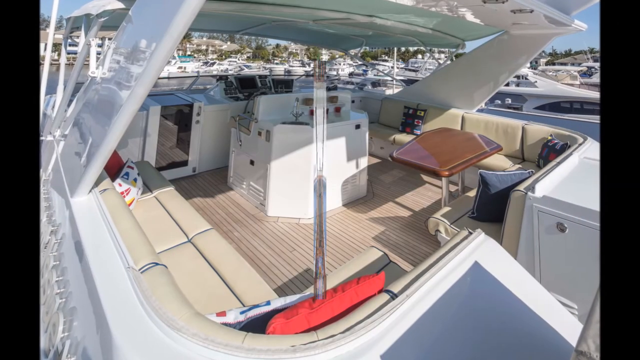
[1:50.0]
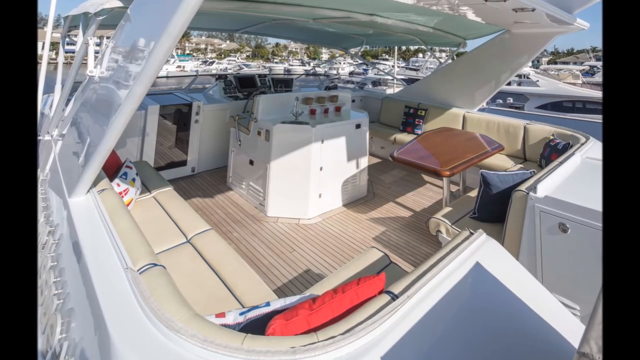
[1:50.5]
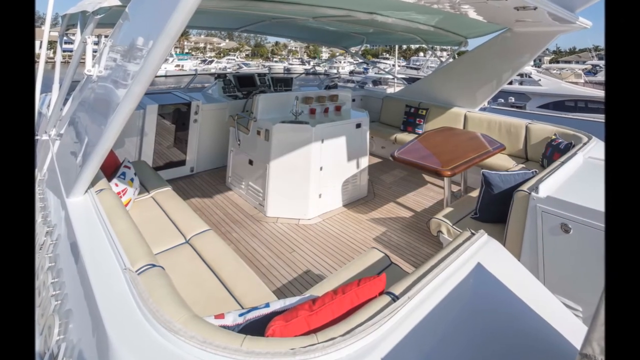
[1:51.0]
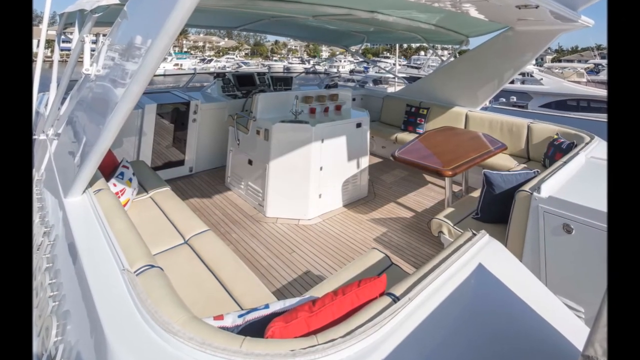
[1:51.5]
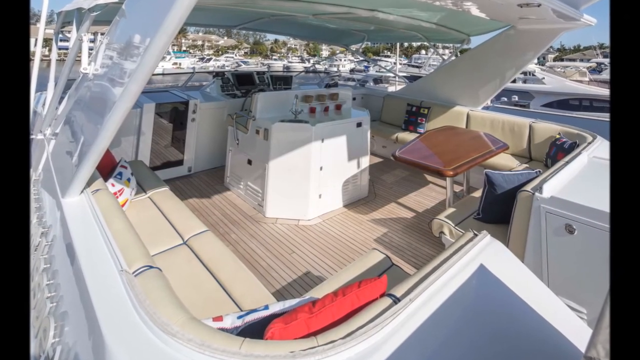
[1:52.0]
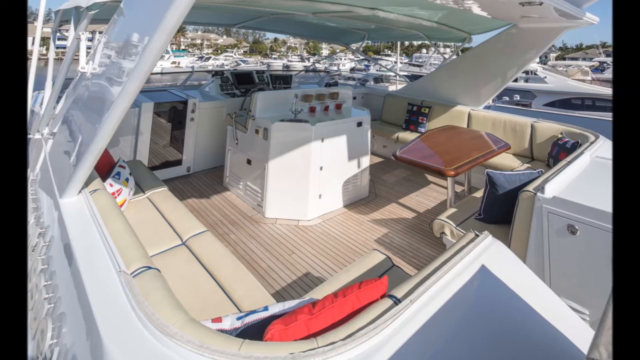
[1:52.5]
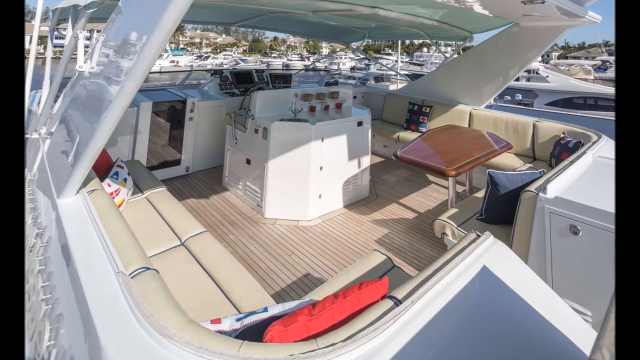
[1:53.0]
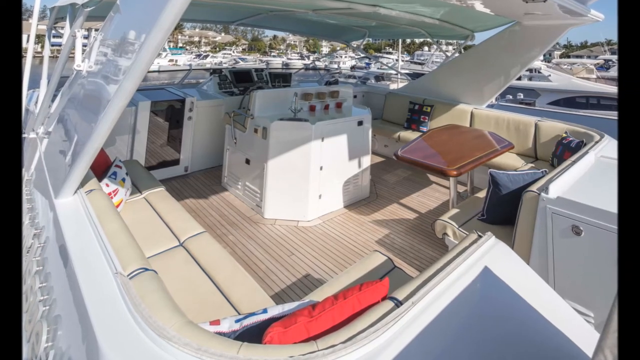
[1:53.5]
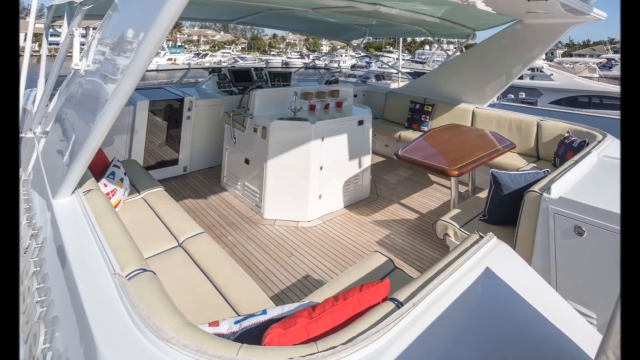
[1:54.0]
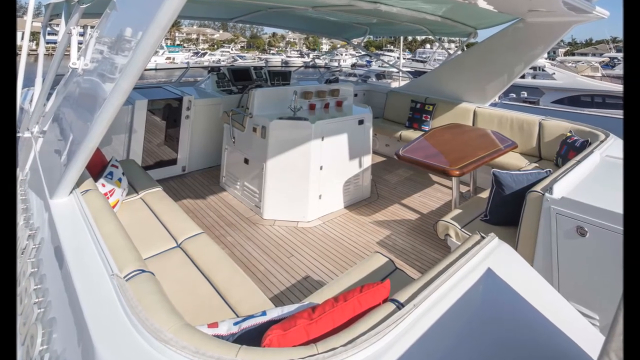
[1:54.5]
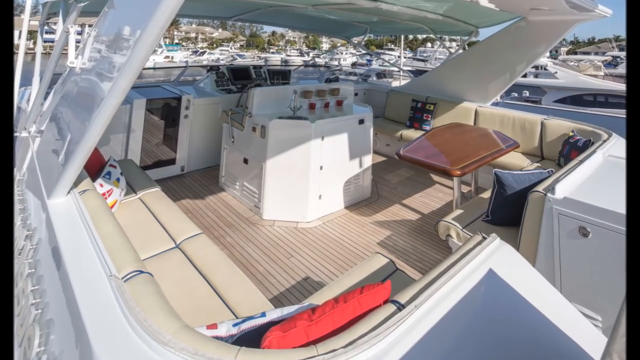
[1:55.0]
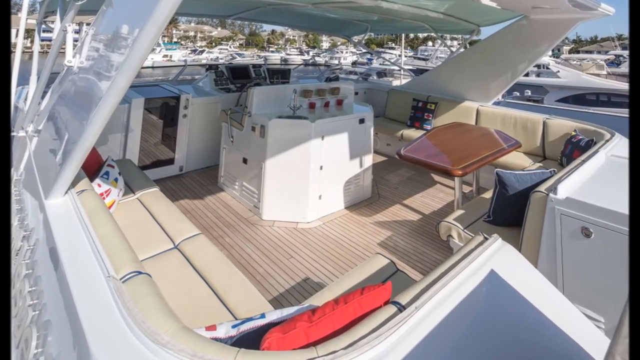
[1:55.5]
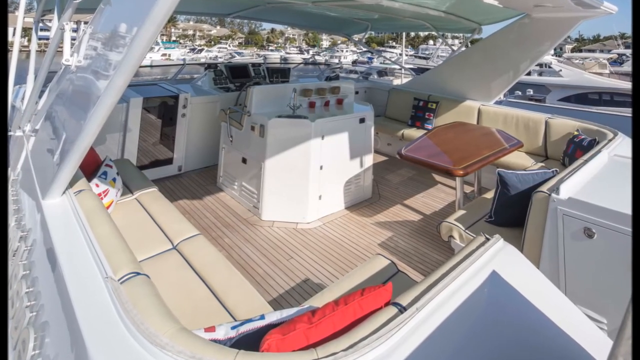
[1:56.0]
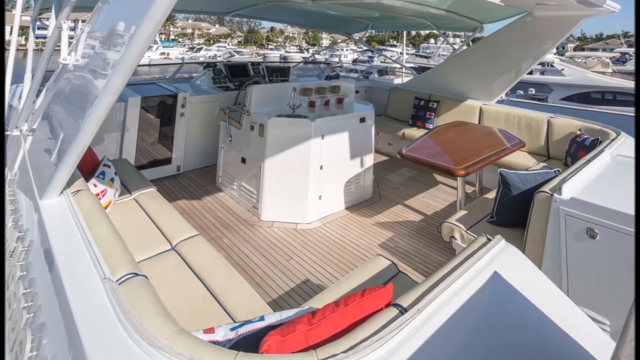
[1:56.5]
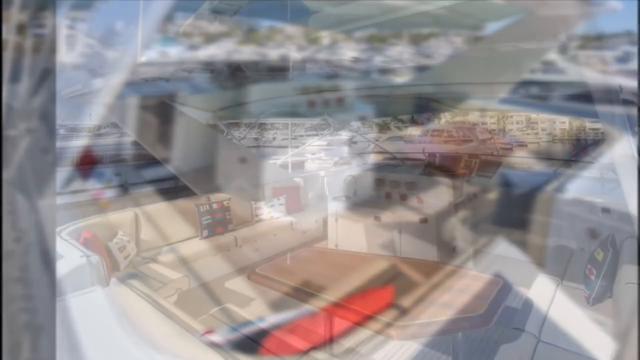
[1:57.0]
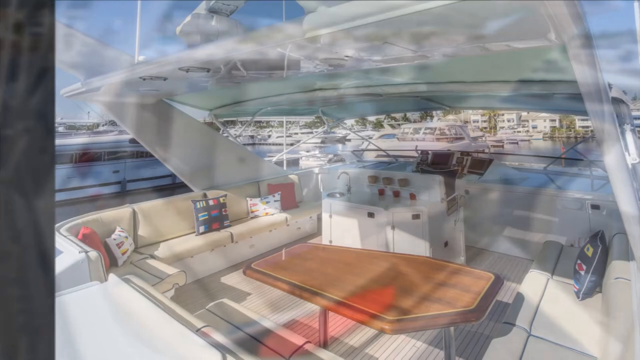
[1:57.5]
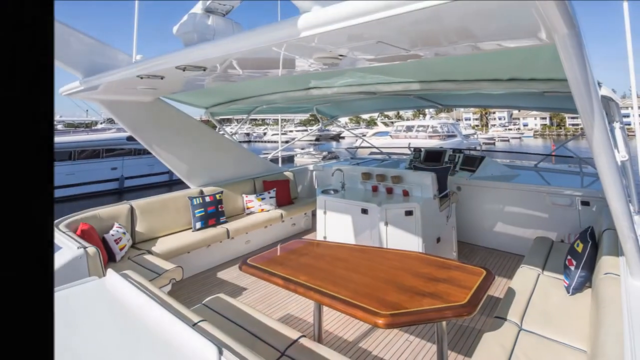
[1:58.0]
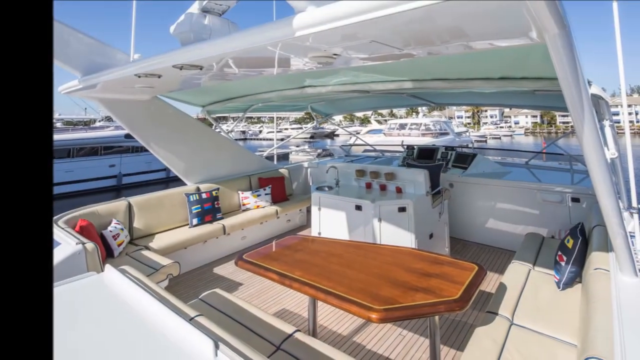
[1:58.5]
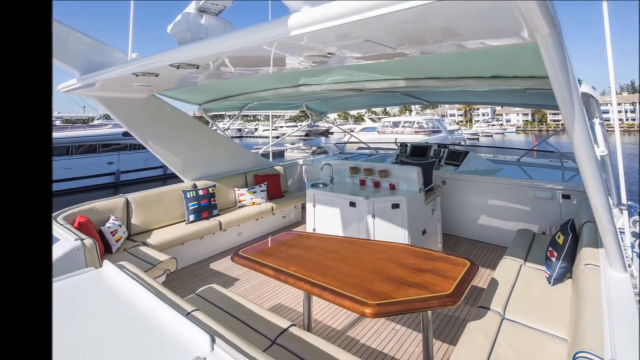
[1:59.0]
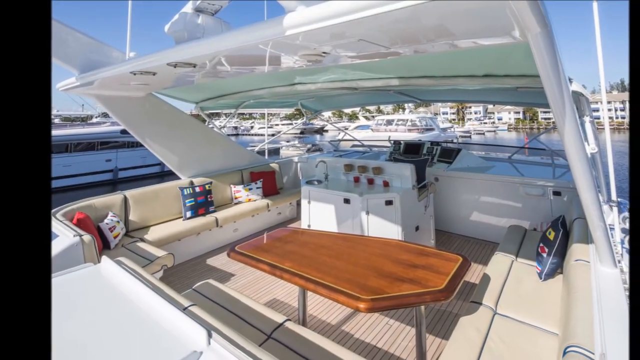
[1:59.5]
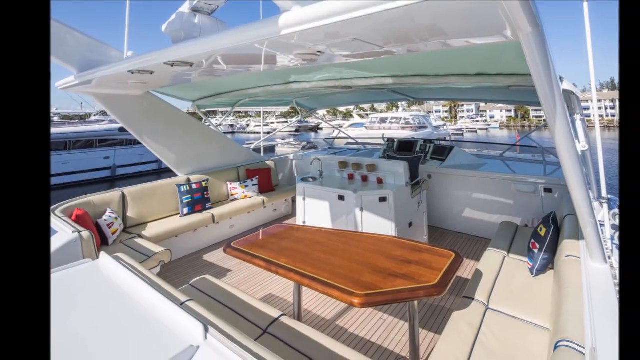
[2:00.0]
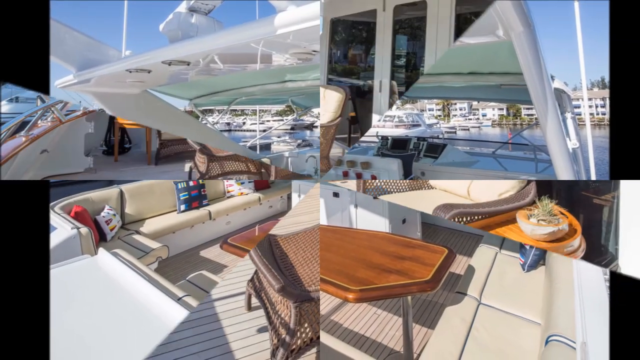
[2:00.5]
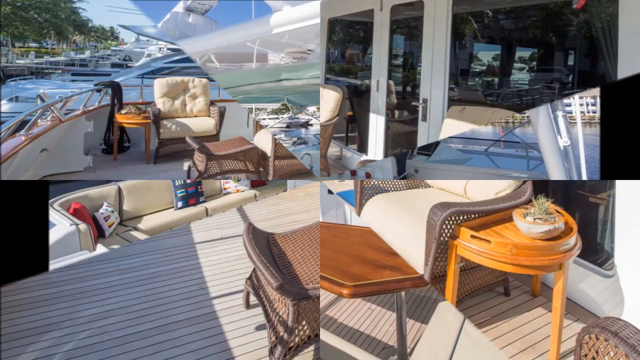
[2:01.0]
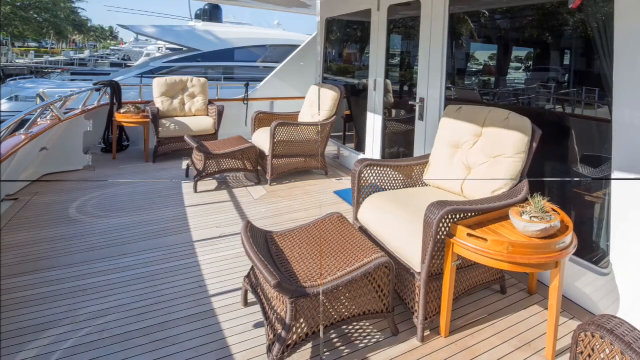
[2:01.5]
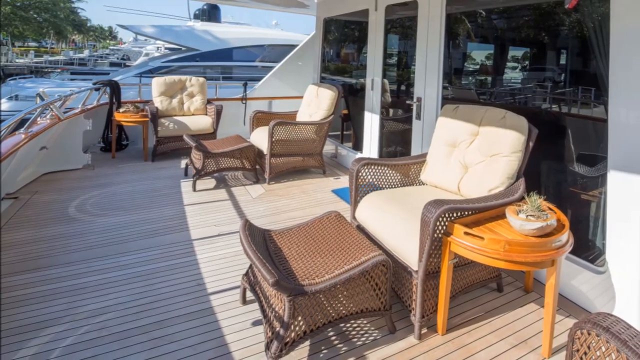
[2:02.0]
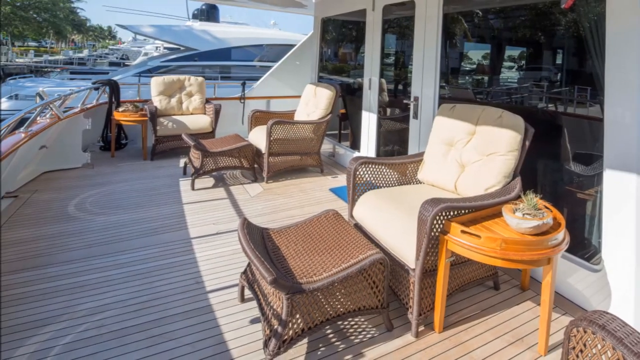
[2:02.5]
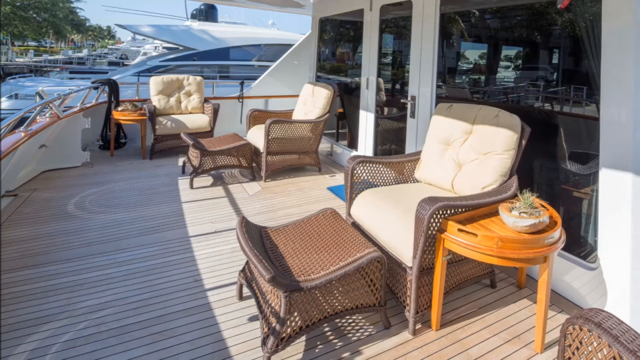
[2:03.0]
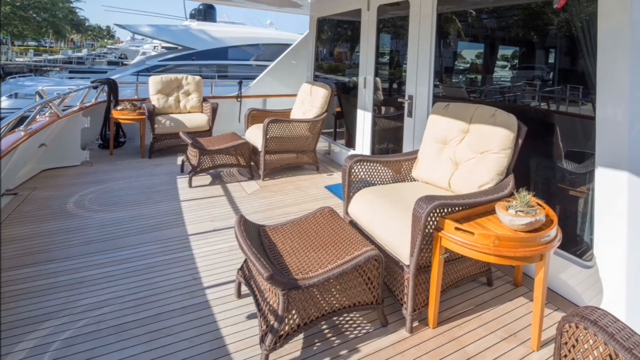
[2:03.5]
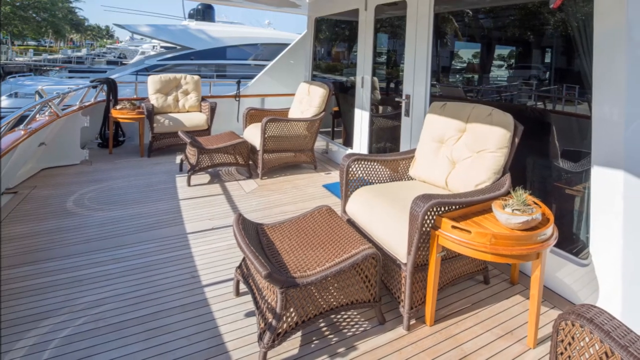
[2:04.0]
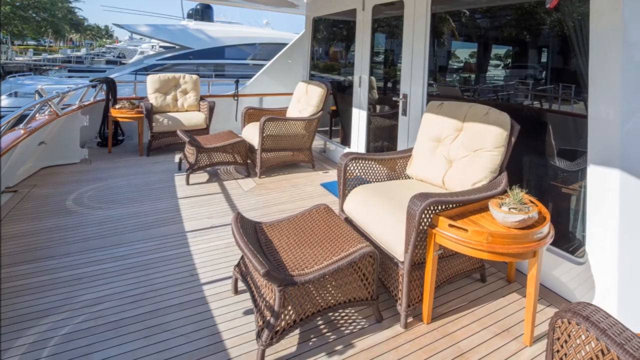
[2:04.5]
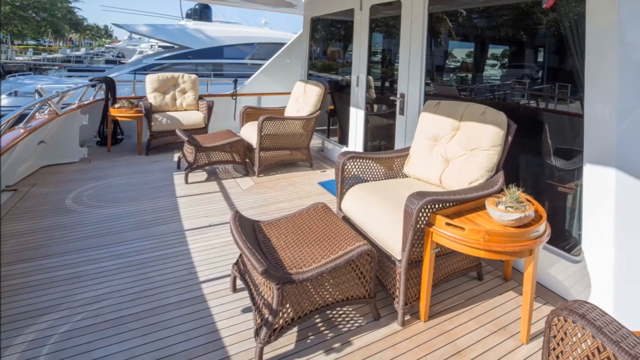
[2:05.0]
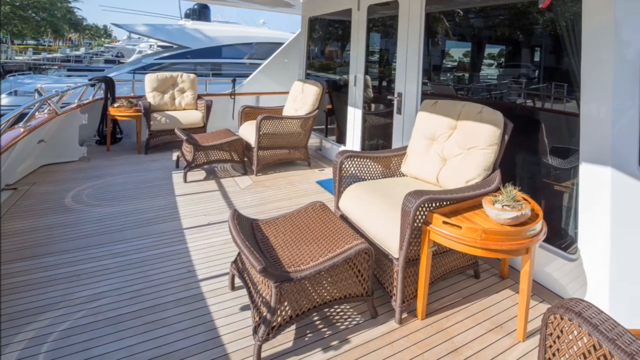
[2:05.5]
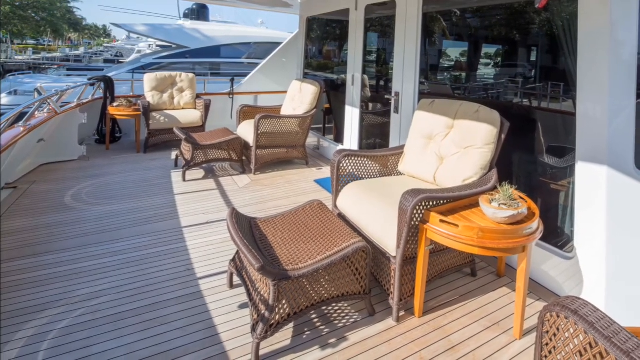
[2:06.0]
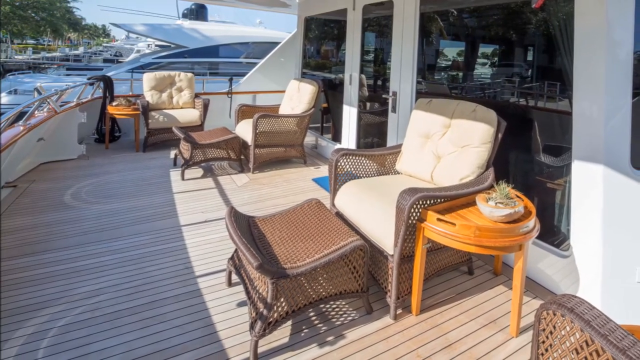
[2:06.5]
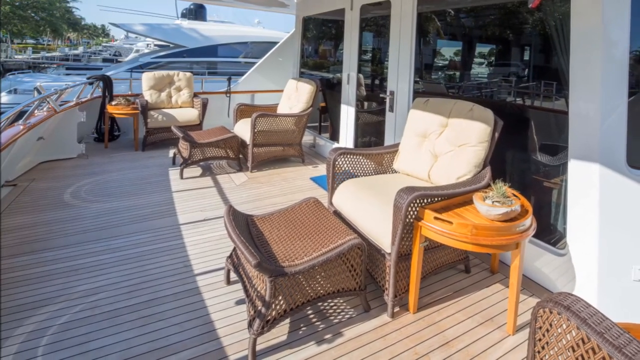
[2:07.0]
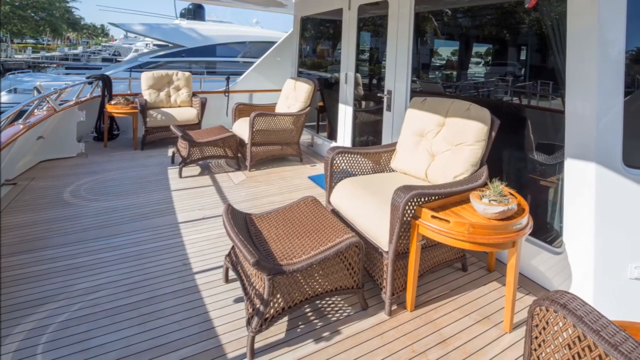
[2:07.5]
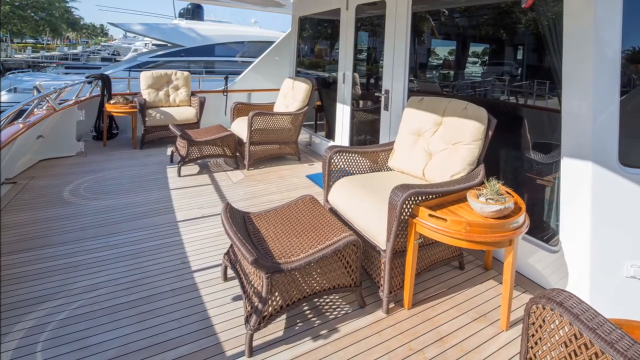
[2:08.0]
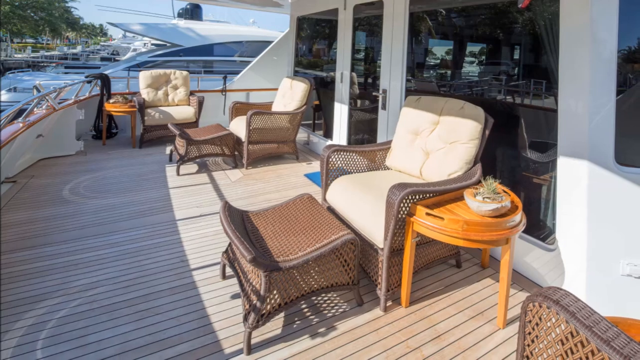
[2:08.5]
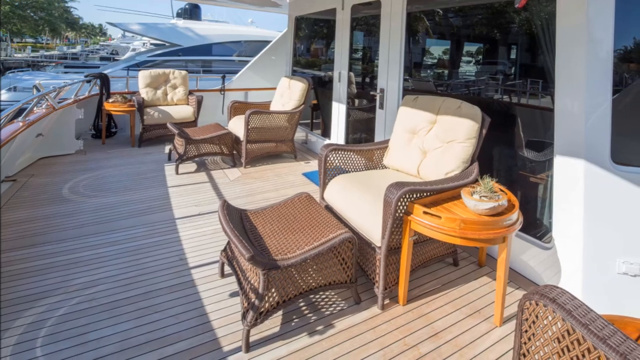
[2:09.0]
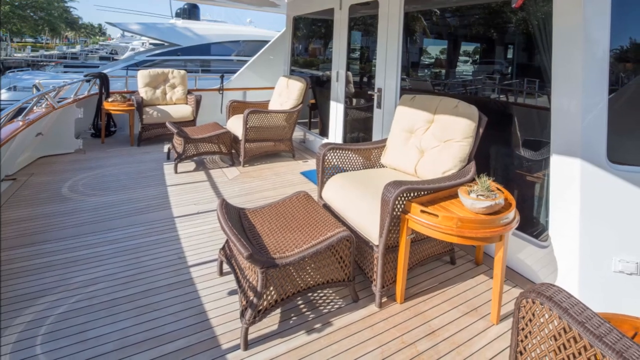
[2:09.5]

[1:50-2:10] An outdoor area near the rear of the yacht, a patio or deck area, has a seat on each side, a small table, and a small bar with its own sink and a counter. There are wicker chairs and wicker footstools, semi-circle end tables, and glass patio doors, and the floor looks like it is made of wood. The yacht is parked, and other yachts in the area are visible. There are steel railings, and the exterior of the boat is white. Two wicker chairs are there, along with another one with a thicker cushion near the edge of the back patio. The image was taken during the daytime.